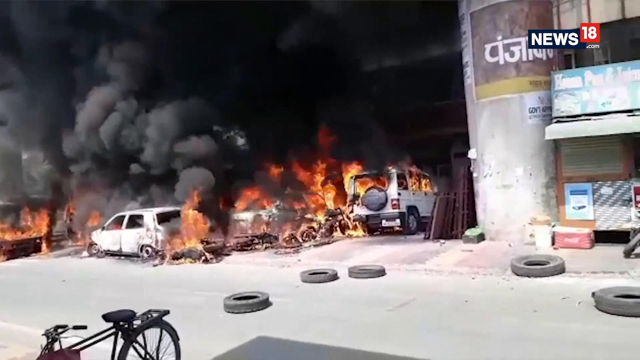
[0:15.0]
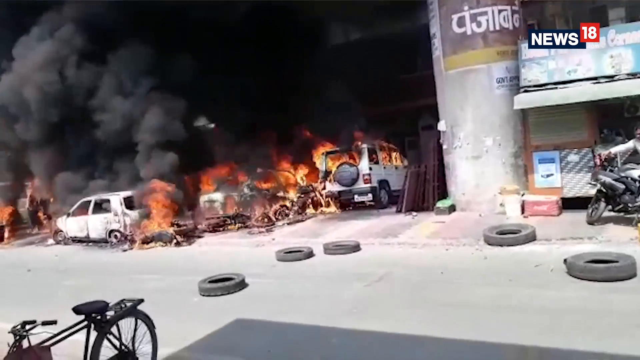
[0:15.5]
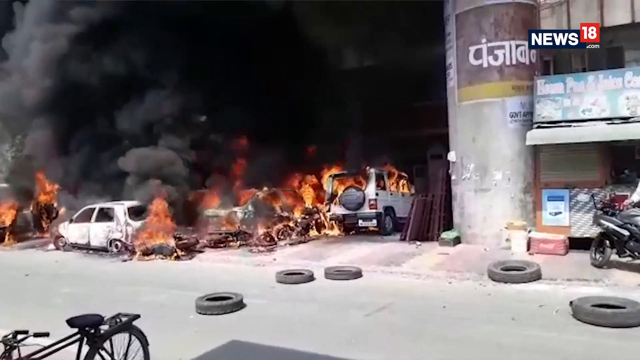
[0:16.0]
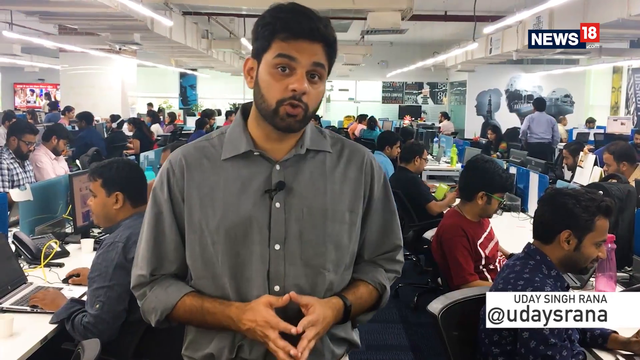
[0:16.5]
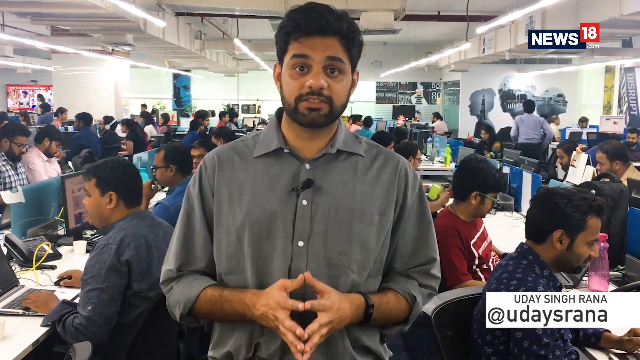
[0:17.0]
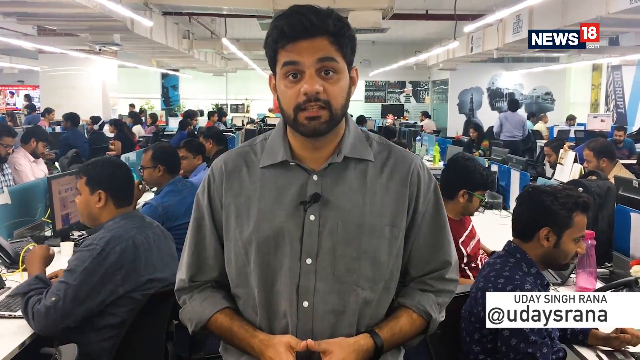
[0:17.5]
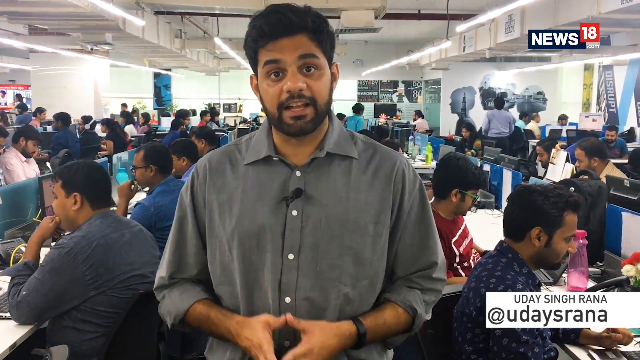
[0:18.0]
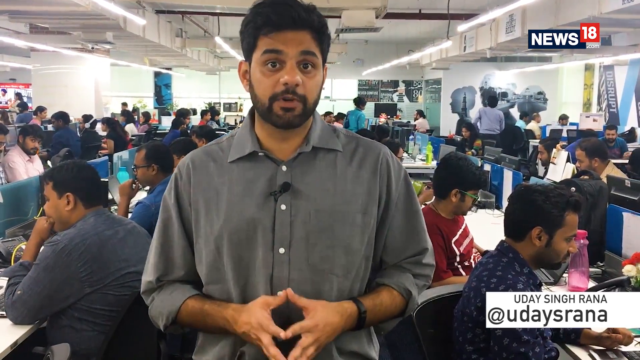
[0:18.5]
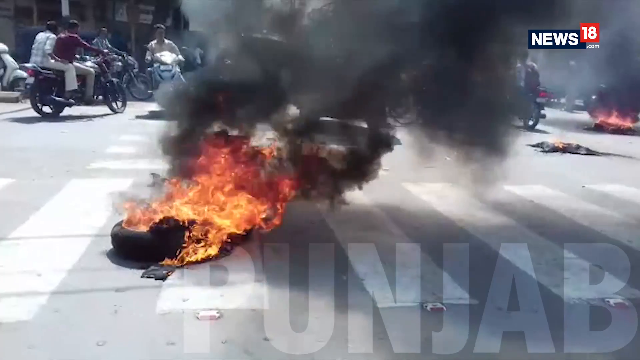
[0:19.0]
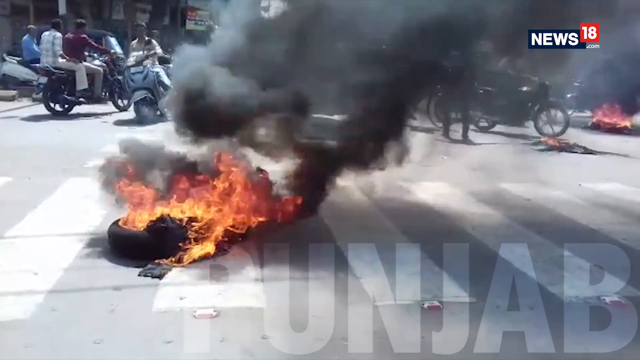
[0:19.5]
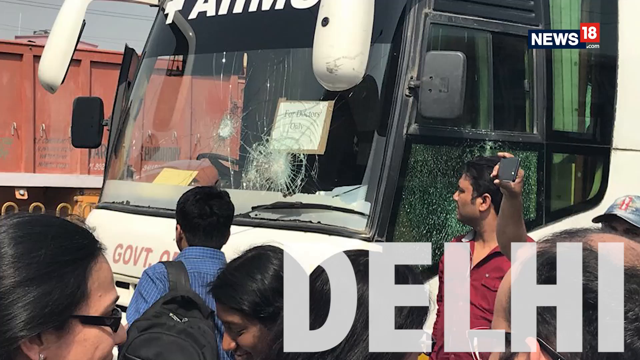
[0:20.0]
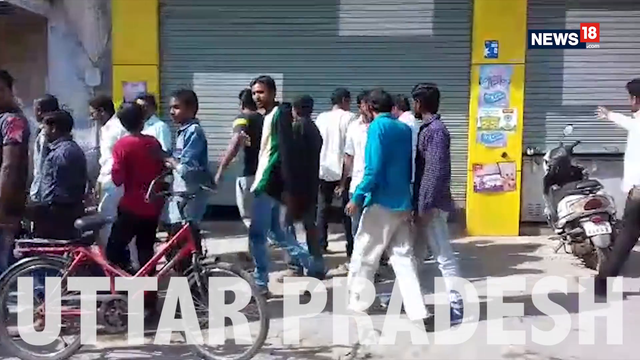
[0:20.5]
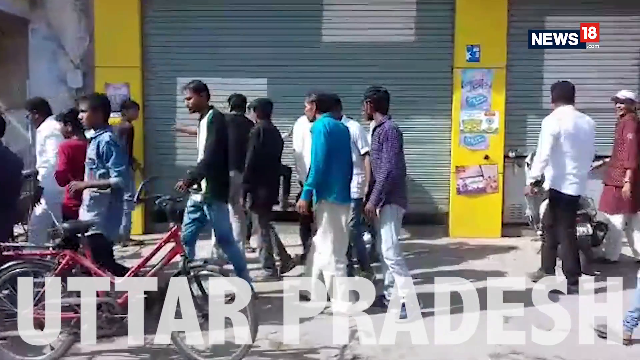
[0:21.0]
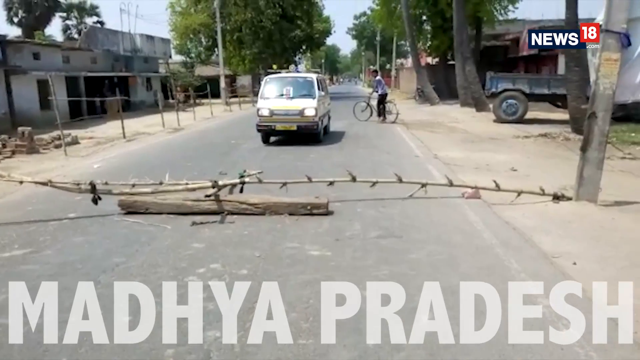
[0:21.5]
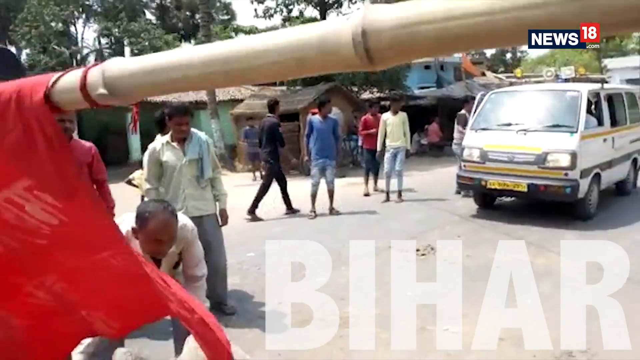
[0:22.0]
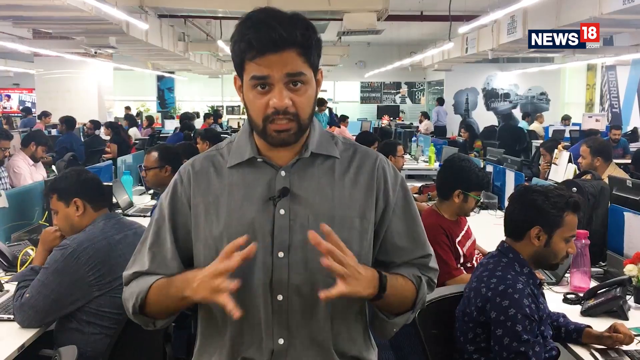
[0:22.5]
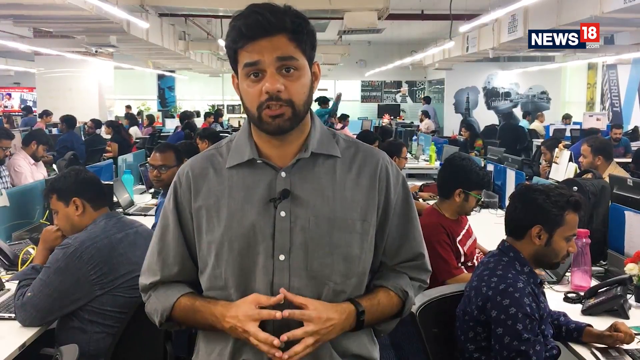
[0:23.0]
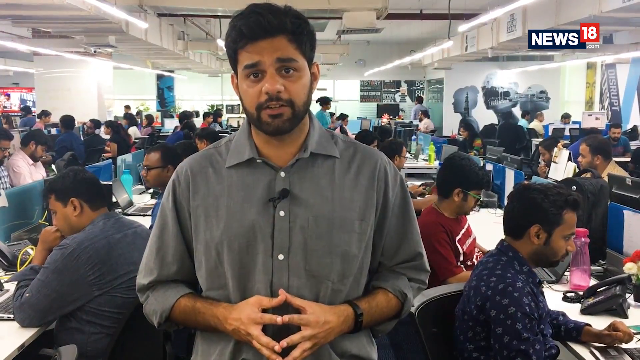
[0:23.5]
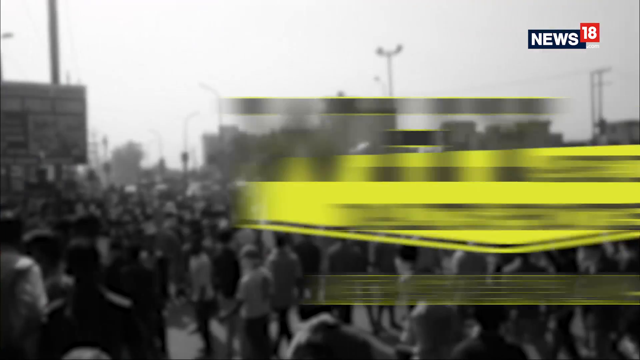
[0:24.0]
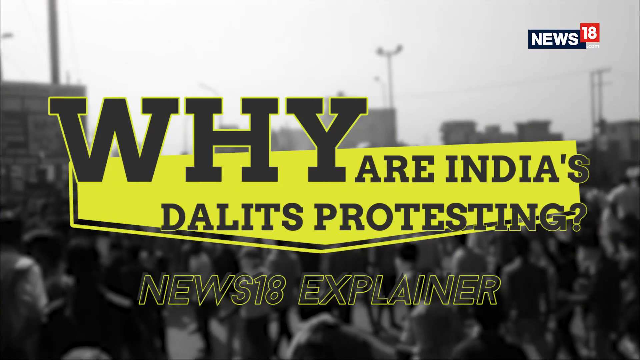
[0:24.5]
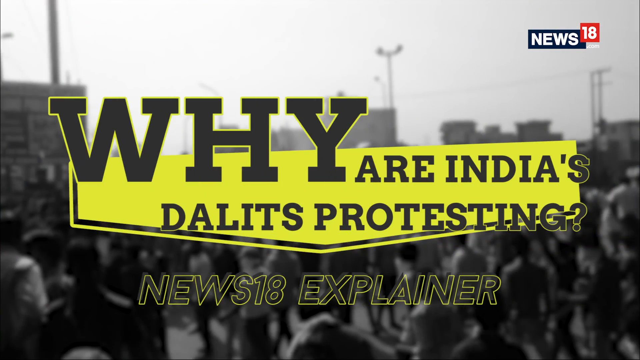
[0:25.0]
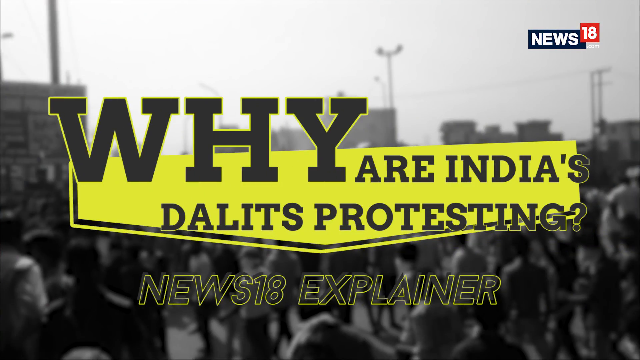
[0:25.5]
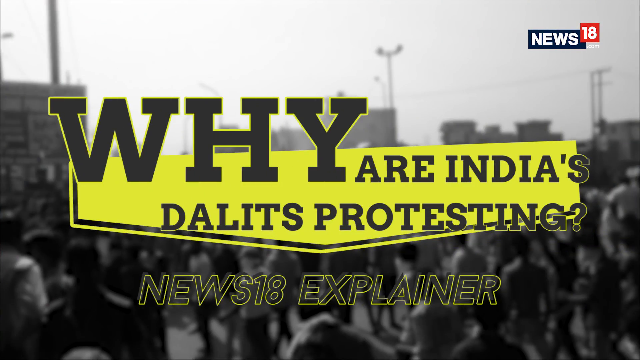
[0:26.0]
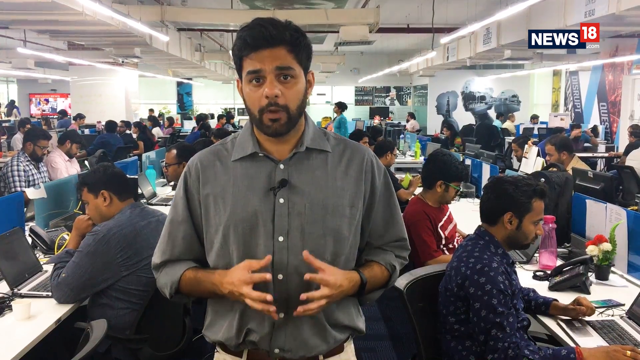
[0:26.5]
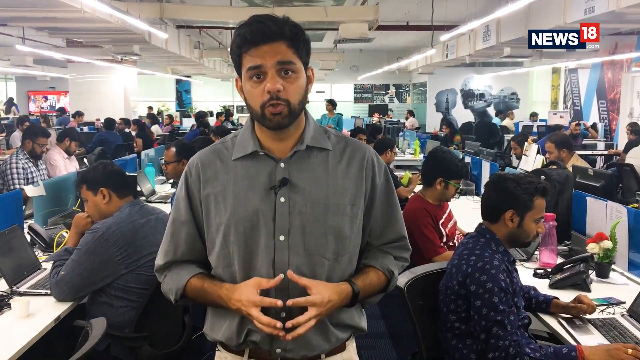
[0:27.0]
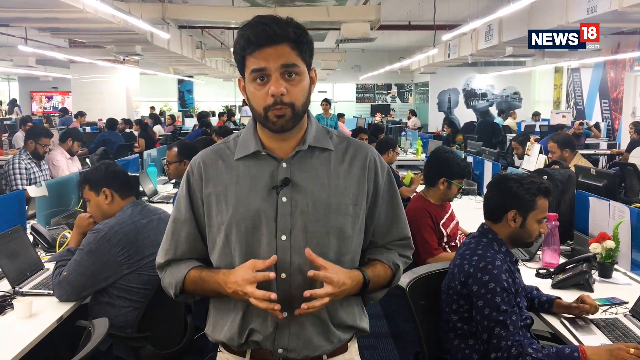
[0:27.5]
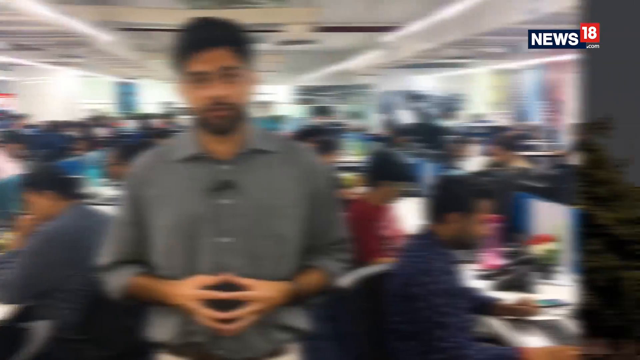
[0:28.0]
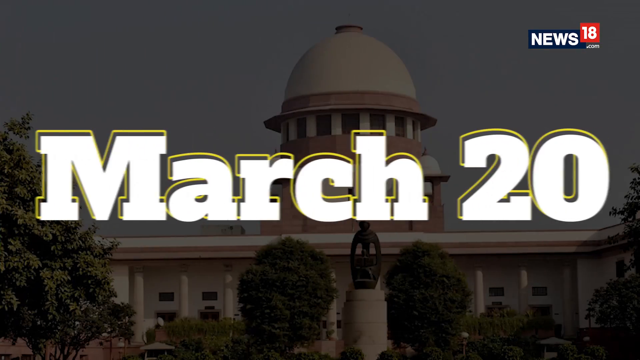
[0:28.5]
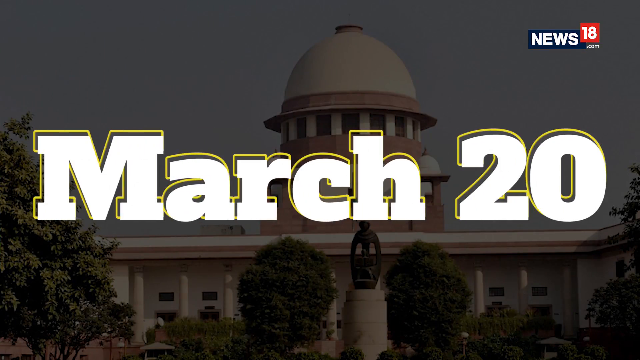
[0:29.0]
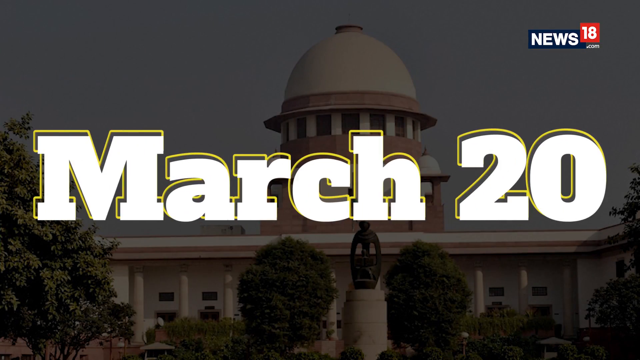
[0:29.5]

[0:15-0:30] The video, from the news channel News 18, is about Bharat Bandh, why Dalits took to the streets, and features a news reporter in a newsroom. March 20th is shown, with no year given. Cars are on fire, tires are being set alight, and roads are blockaded. Text asks "why are India's Dalits protesting" and reads "News 18 explainer". There also appears to be a bullet hole in the windshield of a truck.